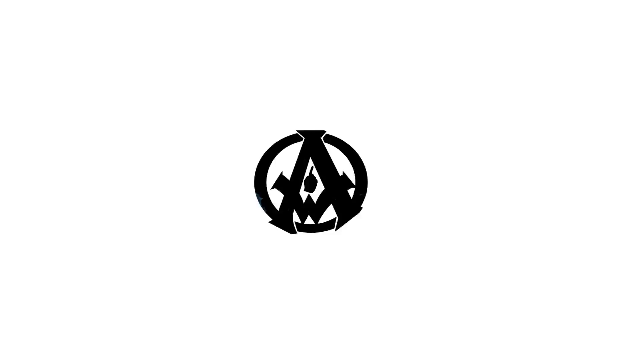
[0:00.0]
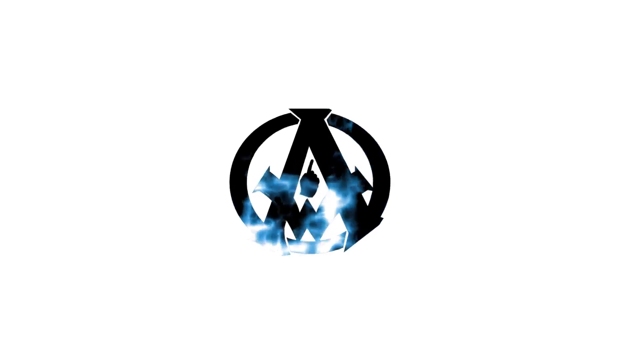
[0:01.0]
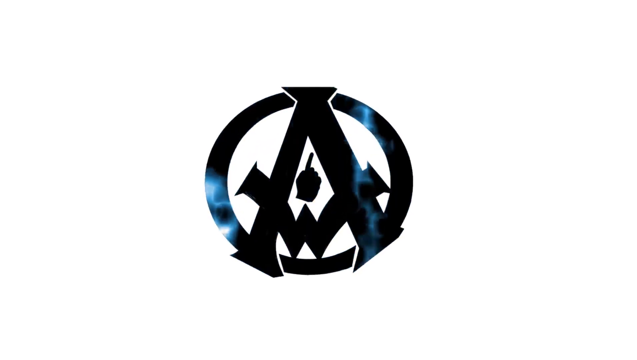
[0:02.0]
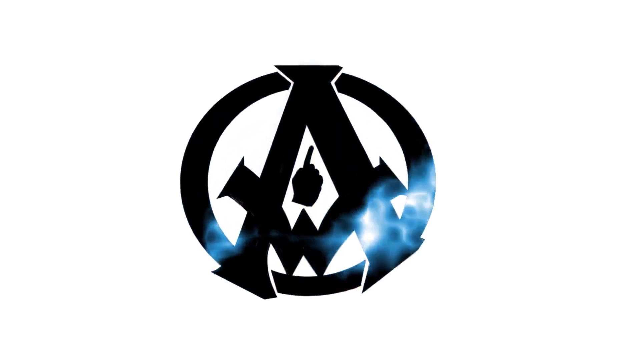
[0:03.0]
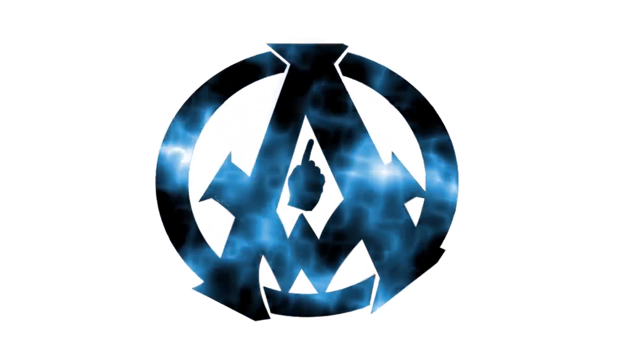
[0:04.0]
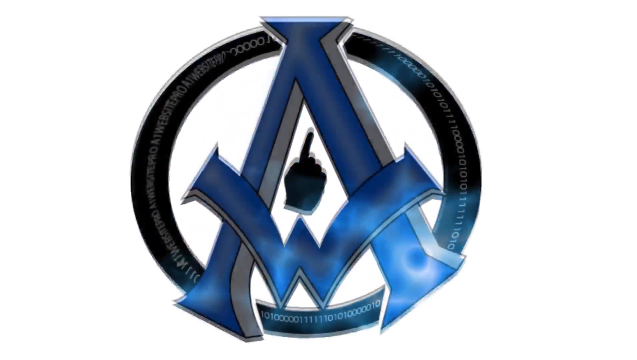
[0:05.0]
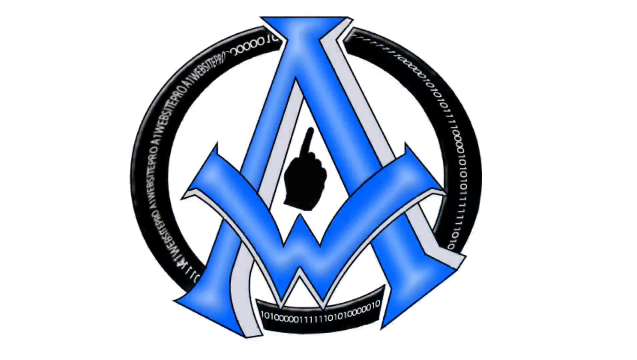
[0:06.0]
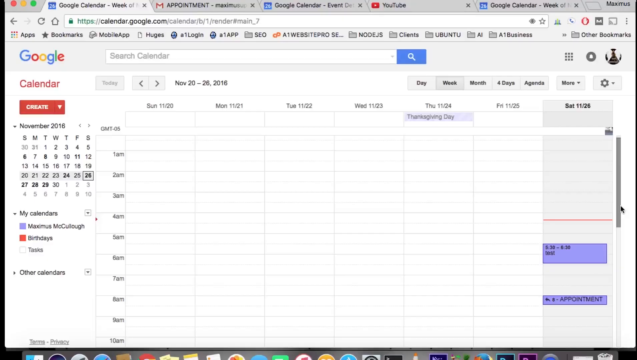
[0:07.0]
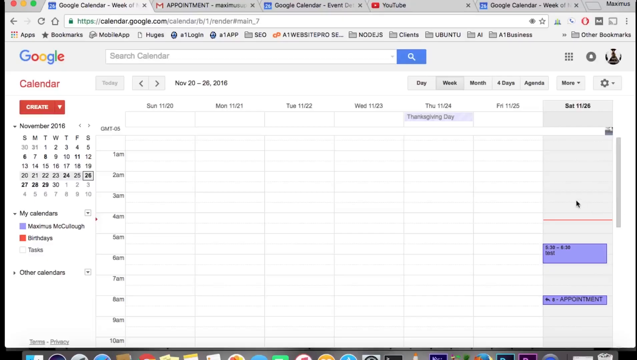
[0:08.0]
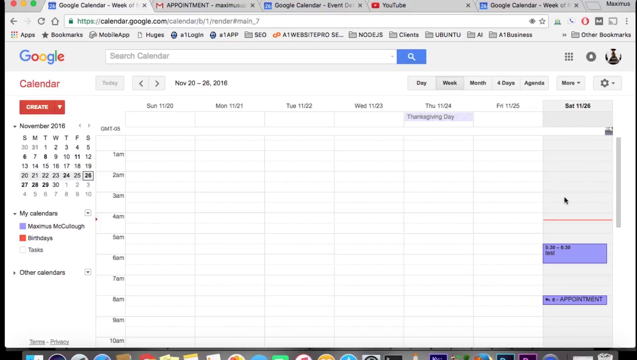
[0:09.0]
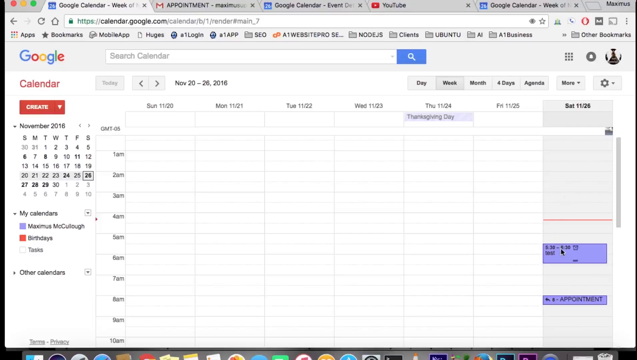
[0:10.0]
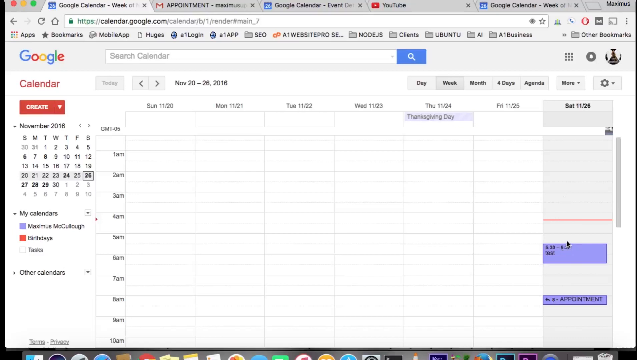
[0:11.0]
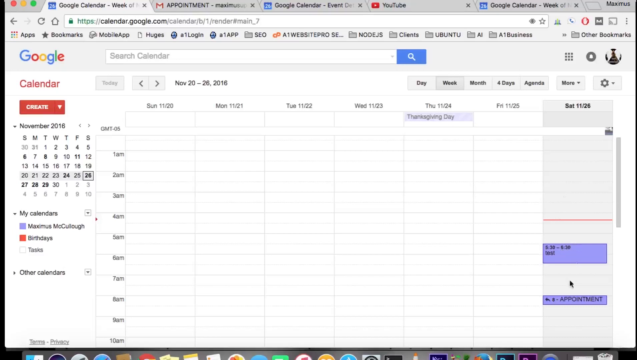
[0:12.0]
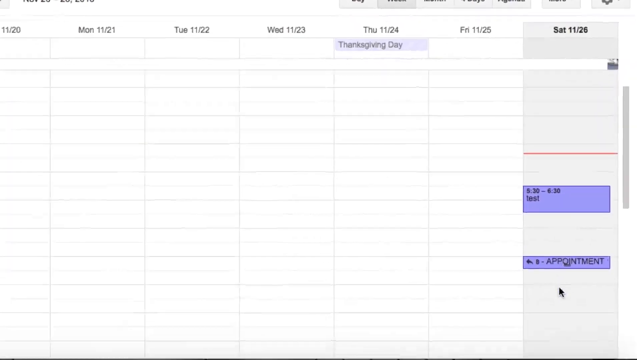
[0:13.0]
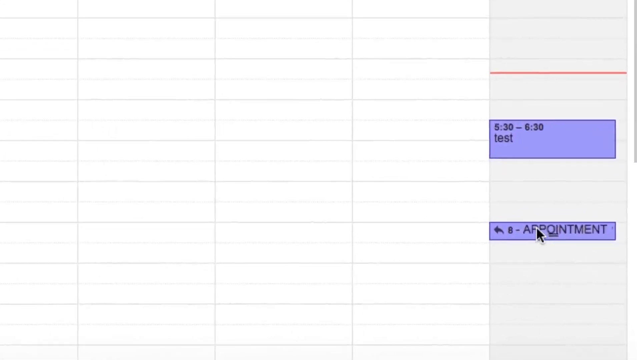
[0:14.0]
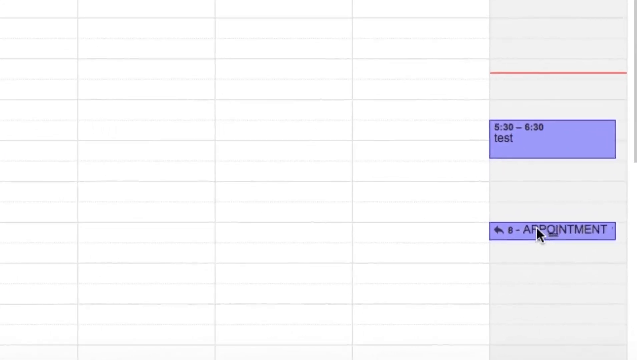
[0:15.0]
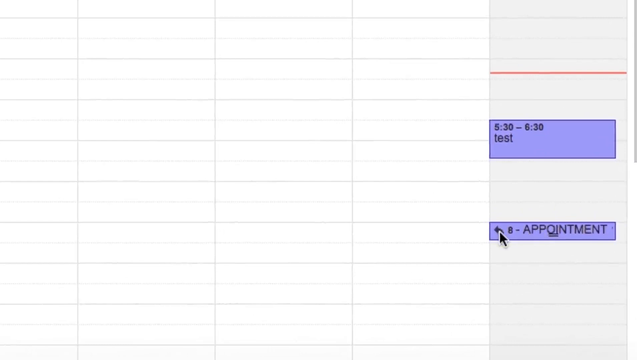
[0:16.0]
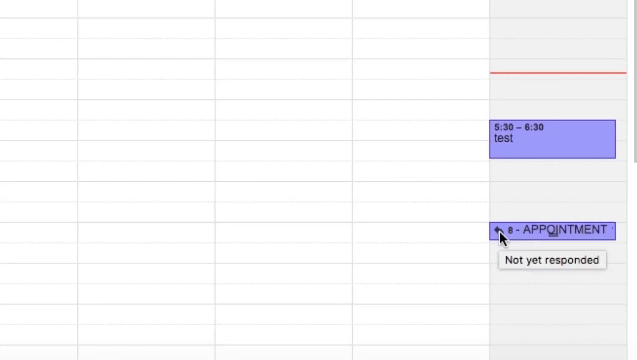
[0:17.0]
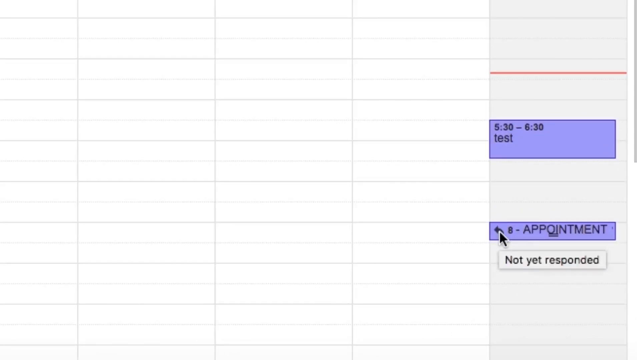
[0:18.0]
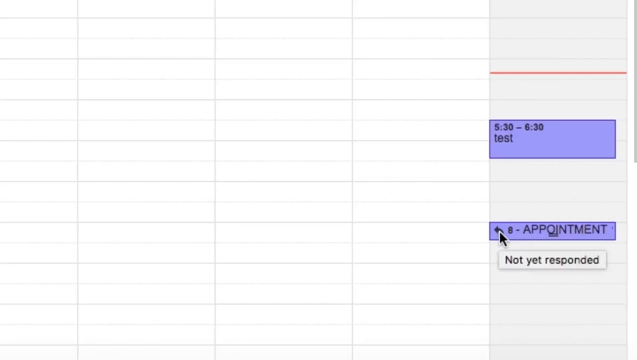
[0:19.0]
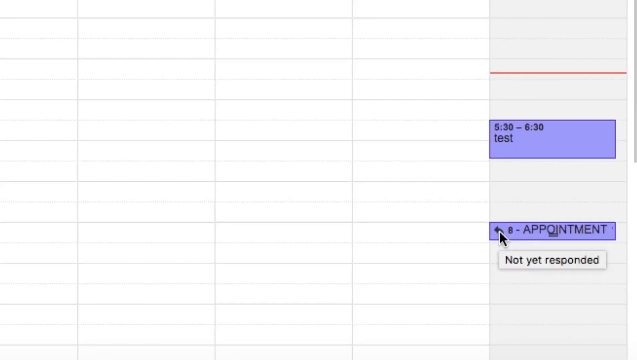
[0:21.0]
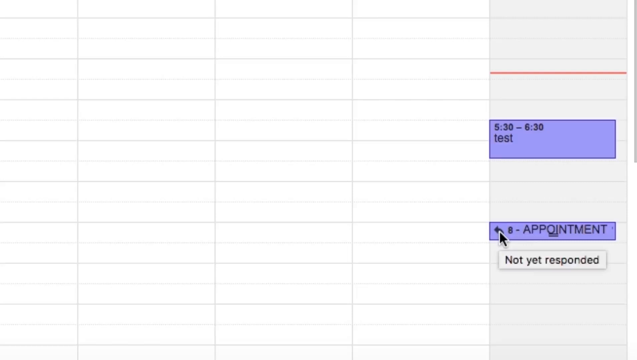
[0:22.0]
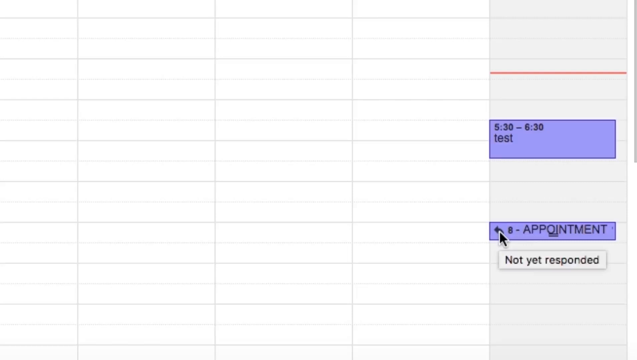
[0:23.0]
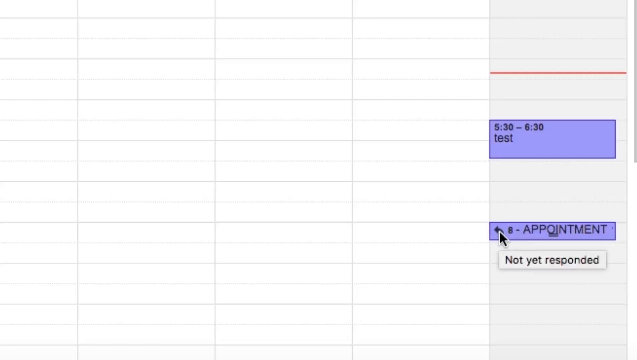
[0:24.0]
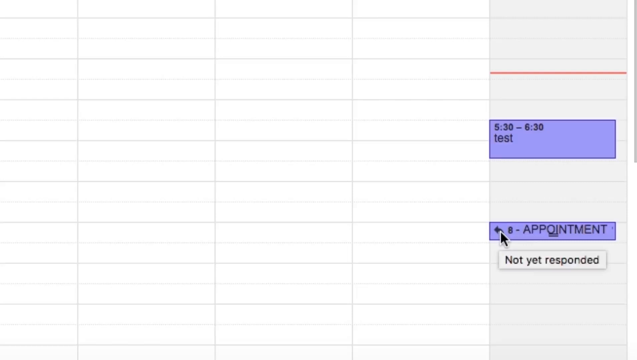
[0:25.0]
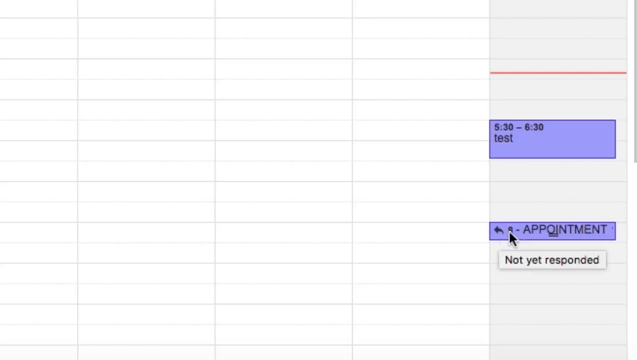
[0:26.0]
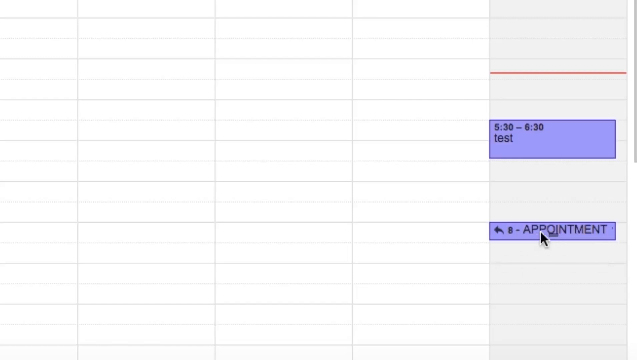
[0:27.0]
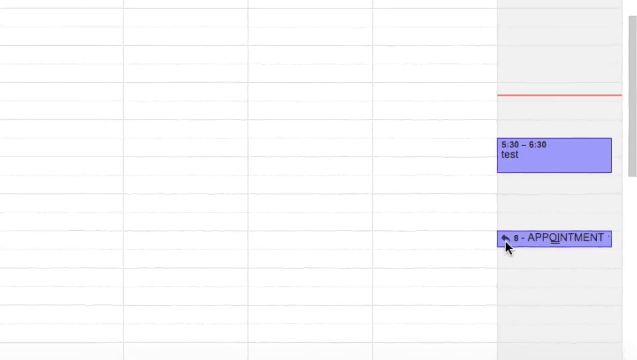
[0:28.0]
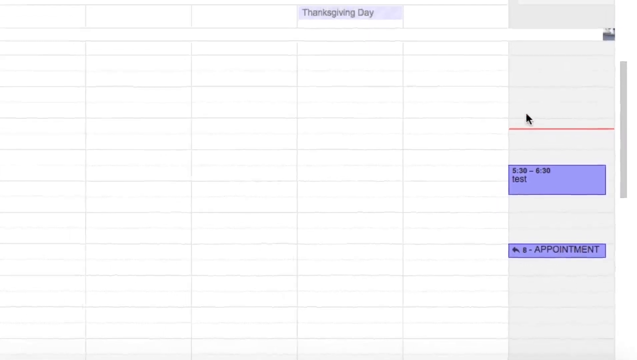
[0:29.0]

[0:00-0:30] A blank white screen shows a black icon. It consists of a circle containing an upside-down V, with its point at the top and its two ends at the bottom, and a W at the bottom of the circle. The two outer parts of the W curve slightly and meet the legs of the V about three quarters of the way down. The final element of the icon looks to be a hand with the index finger pointing up. The icon moves closer to the front of the screen, growing larger as it comes forward. The icon itself does not change, but bluish reflections that kind of look like clouds appear randomly on its parts as it grows.